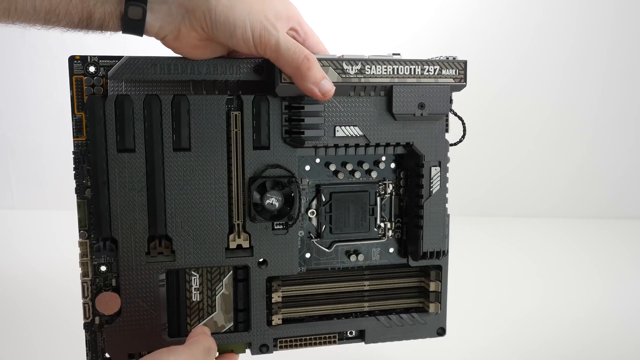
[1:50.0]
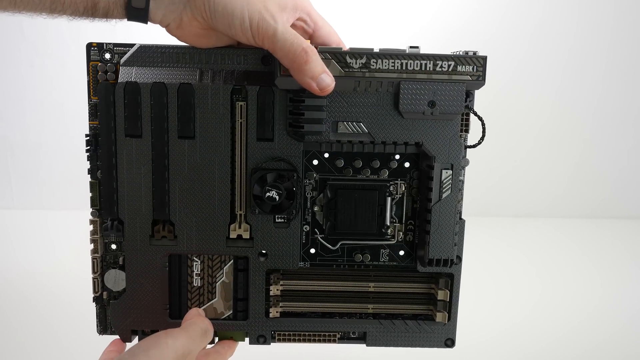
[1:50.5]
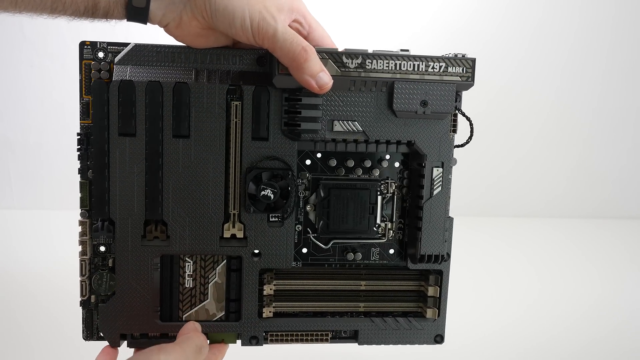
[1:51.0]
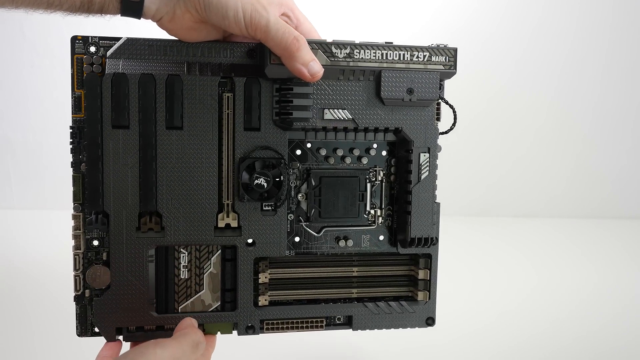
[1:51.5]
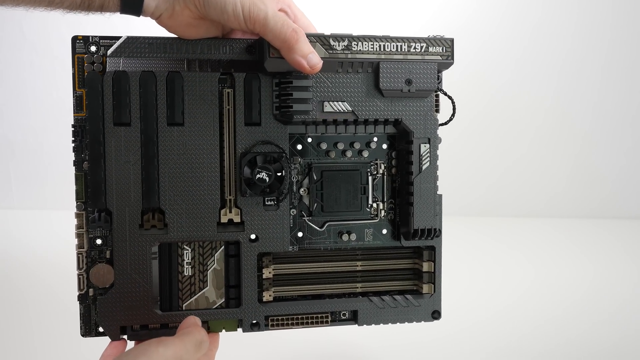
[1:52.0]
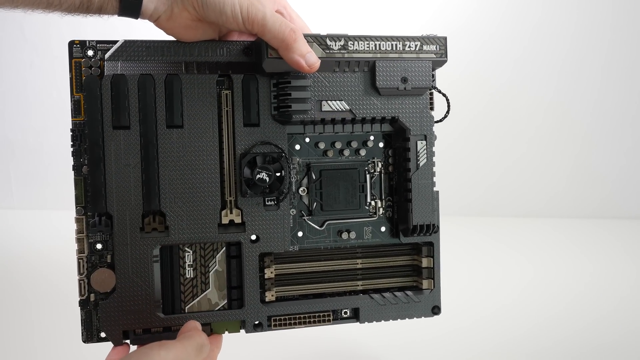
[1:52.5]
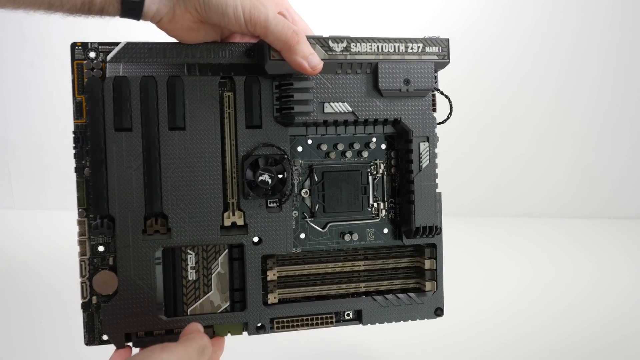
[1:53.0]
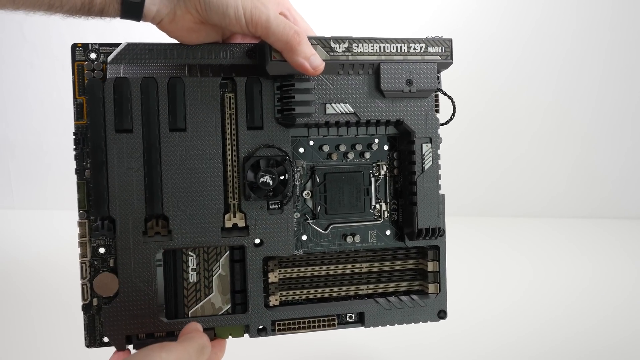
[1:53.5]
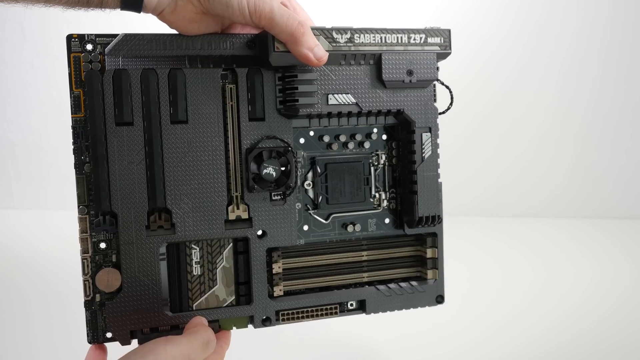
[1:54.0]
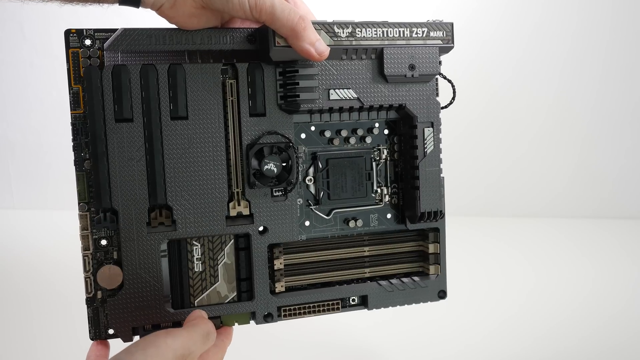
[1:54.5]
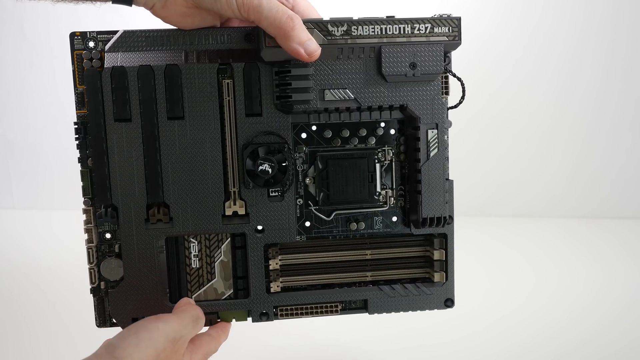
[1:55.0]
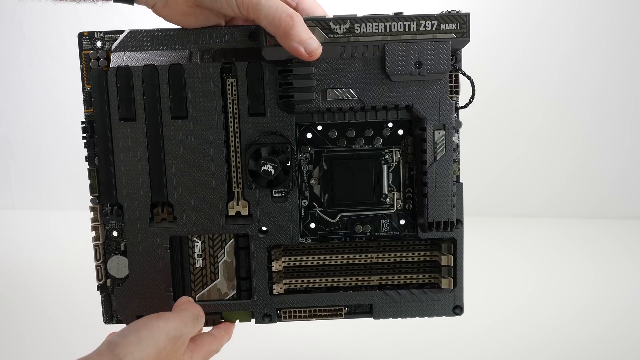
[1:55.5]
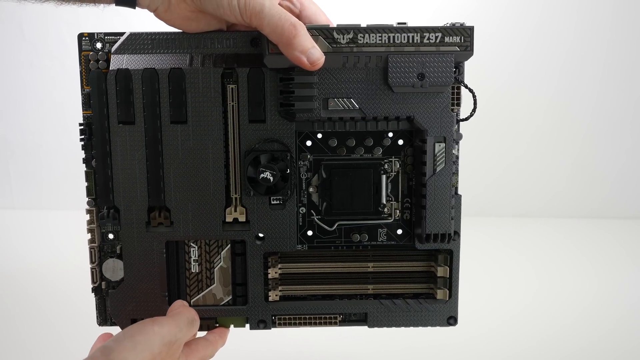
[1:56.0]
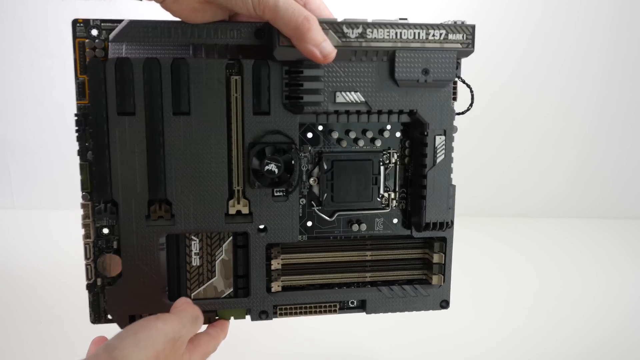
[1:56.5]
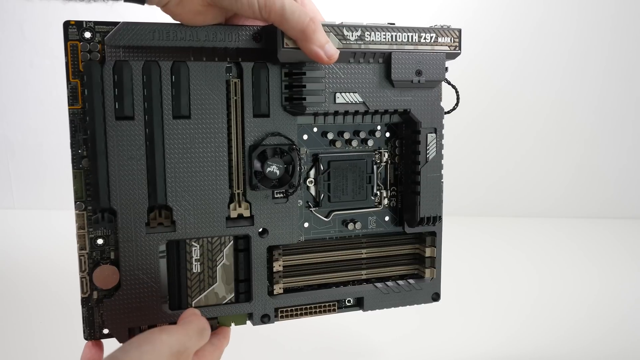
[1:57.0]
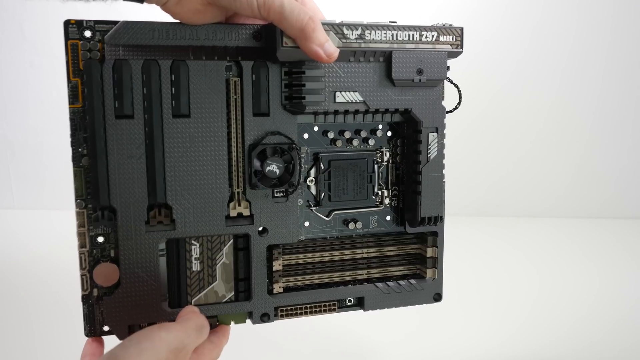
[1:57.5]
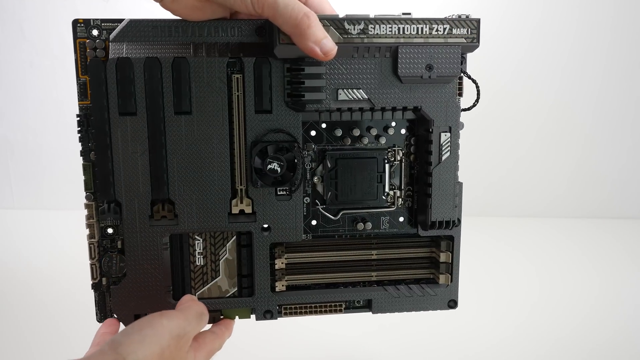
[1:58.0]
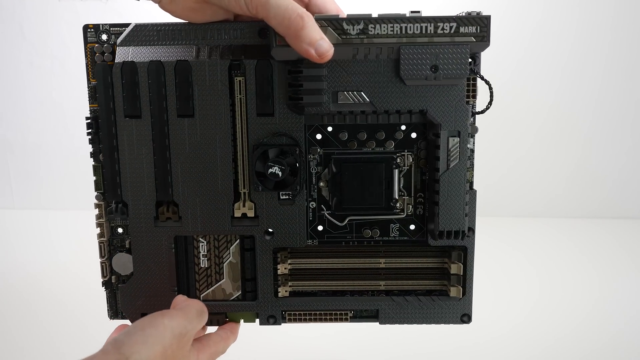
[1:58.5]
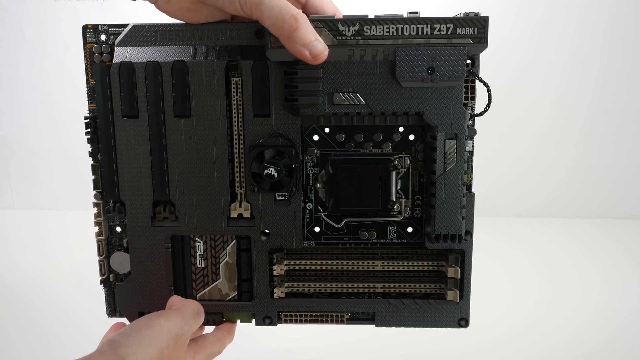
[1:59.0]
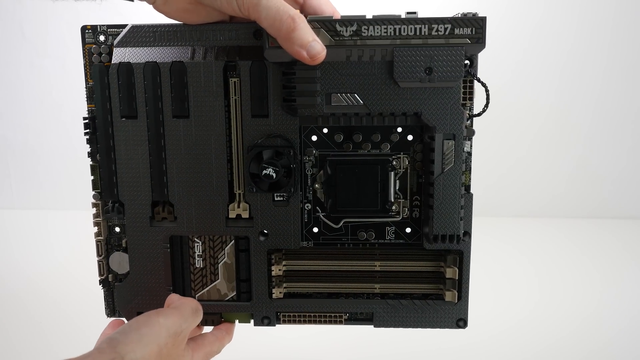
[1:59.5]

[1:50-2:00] The video creator holds the motherboard in its frontal position, with the left hand on top of the motherboard and the right hand on the bottom. The thumbs of both hands are shown, with the other four fingers rested behind the motherboard to secure it. The person rotates the motherboard slightly to show different angles; only the thumbs and parts of the hands are shown, at the top border for the left hand and the bottom border for the right hand. Part of a very hairy forearm appears in the top left-hand corner of the screen with a black bracelet of some sort, either a watch or an anti-static bracelet. As the motherboard is tilted, the lighting and shadows shift, showing the reflectivity of its black surface: the silver parts darken and brighten, and light travels across the black surface to reveal the dotted, stippled design.